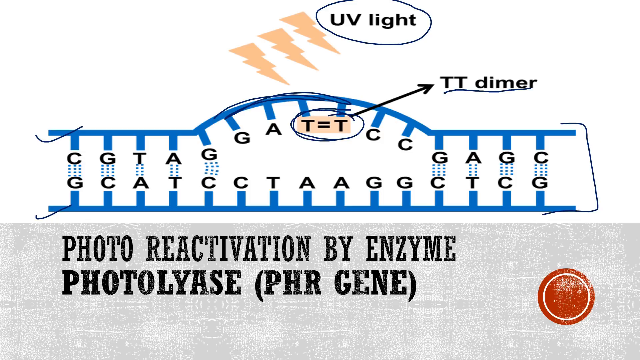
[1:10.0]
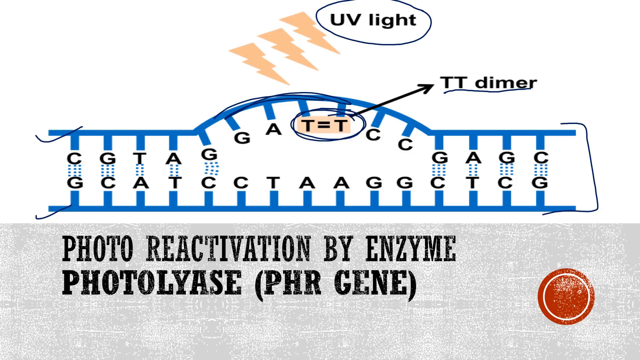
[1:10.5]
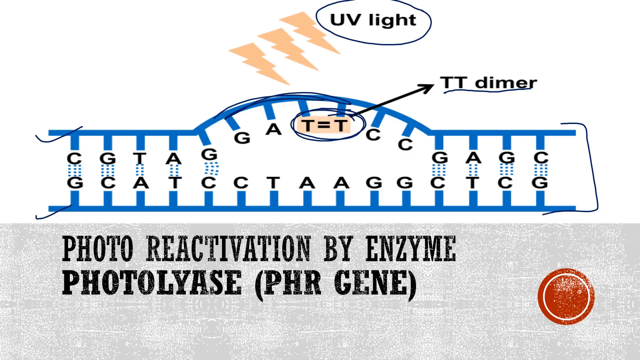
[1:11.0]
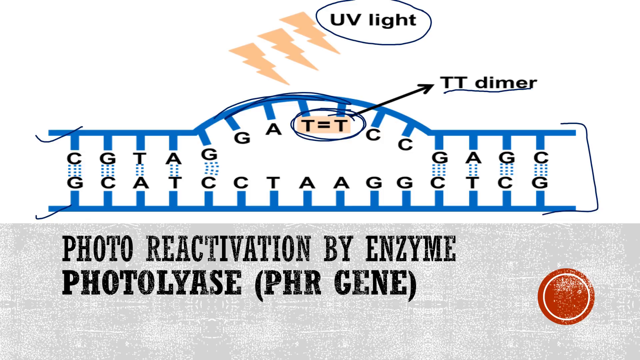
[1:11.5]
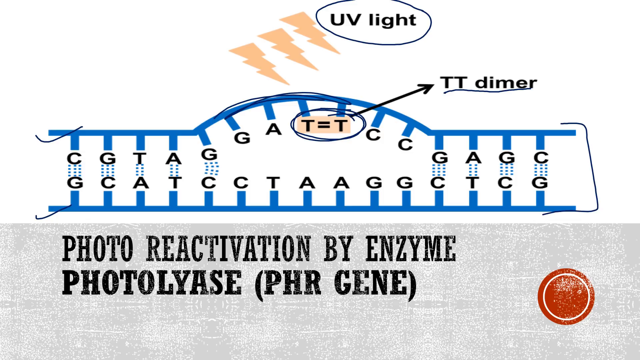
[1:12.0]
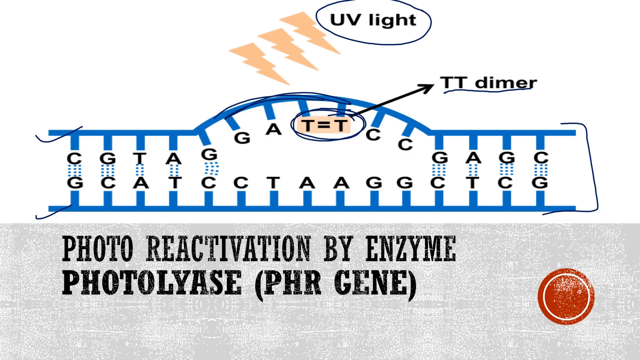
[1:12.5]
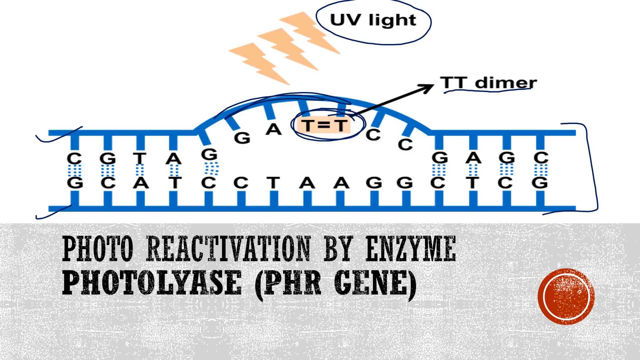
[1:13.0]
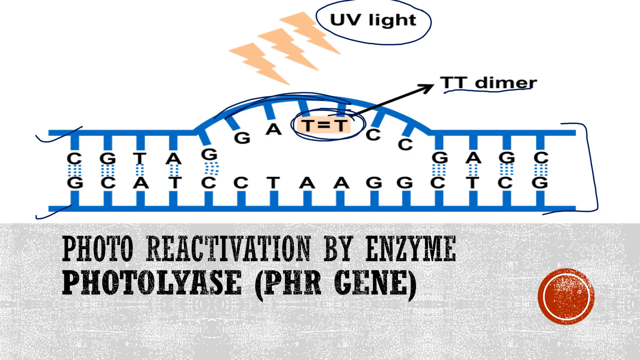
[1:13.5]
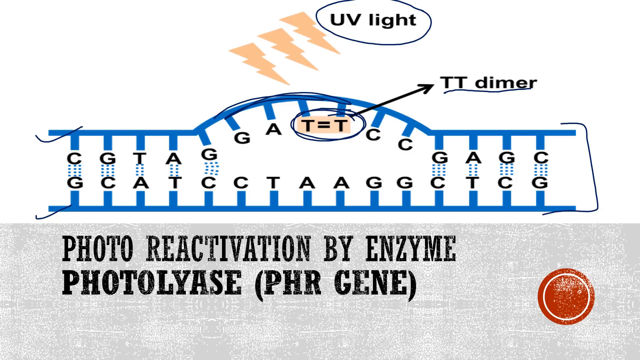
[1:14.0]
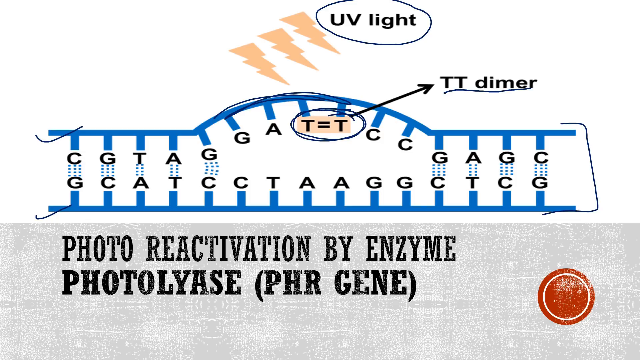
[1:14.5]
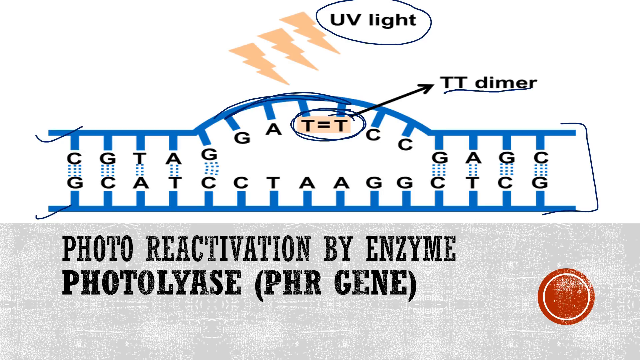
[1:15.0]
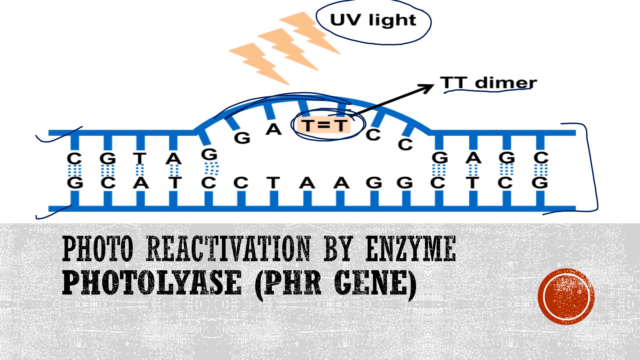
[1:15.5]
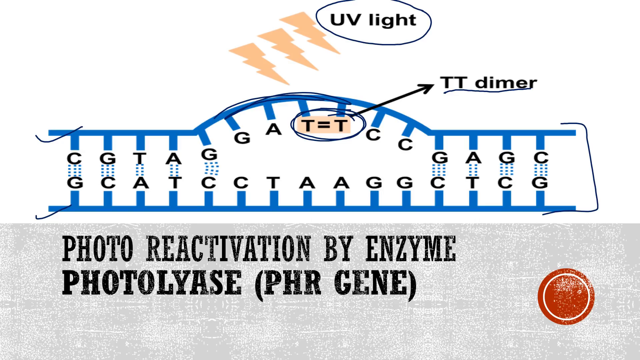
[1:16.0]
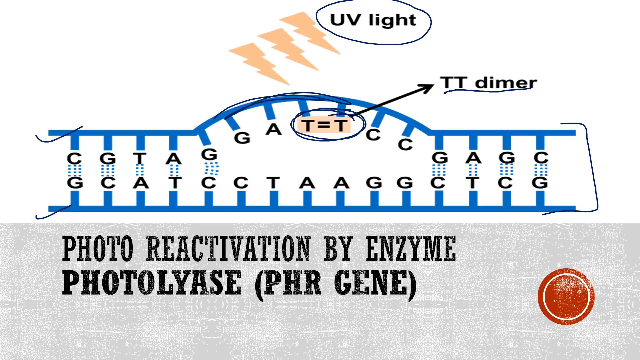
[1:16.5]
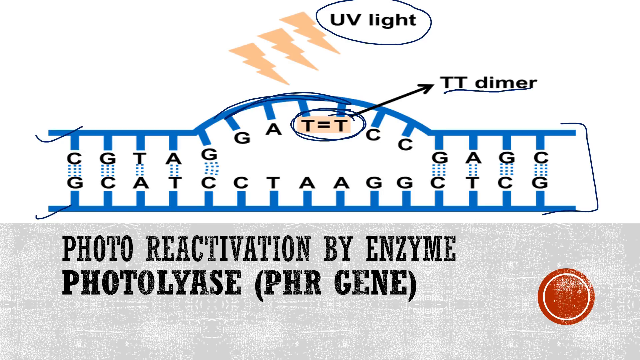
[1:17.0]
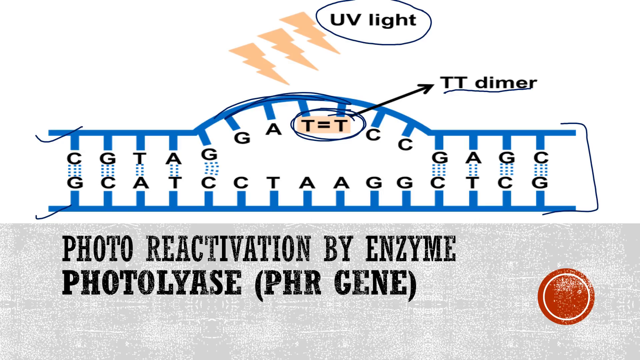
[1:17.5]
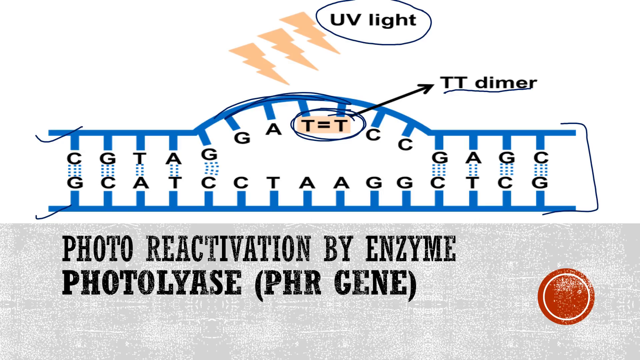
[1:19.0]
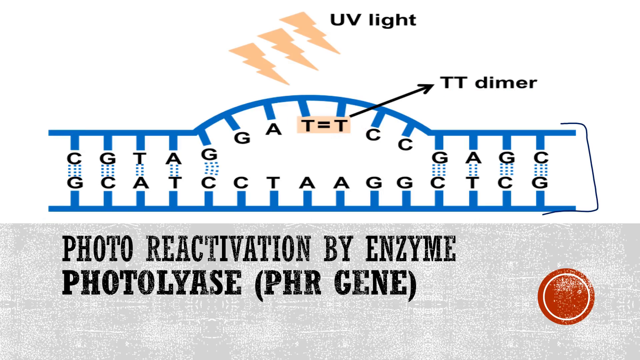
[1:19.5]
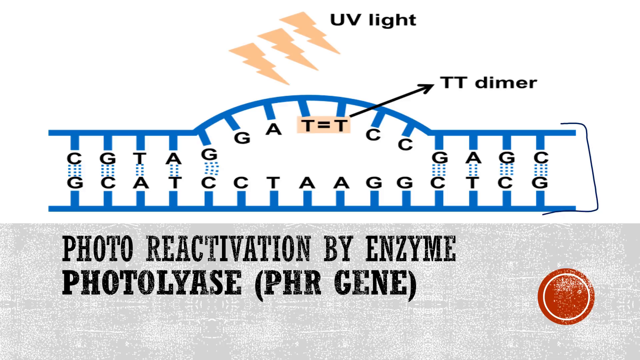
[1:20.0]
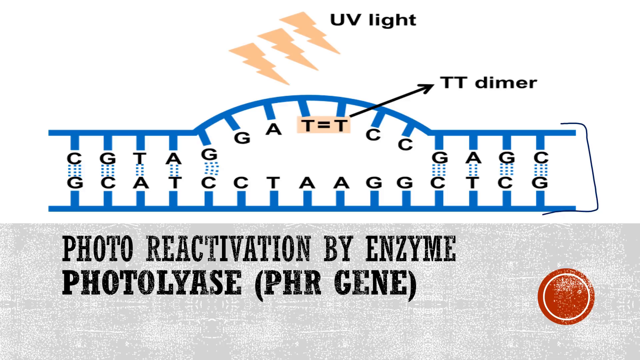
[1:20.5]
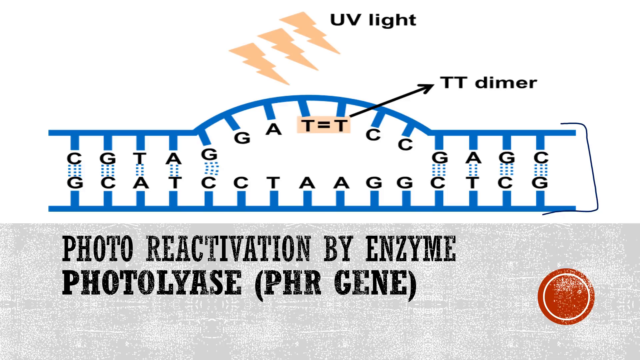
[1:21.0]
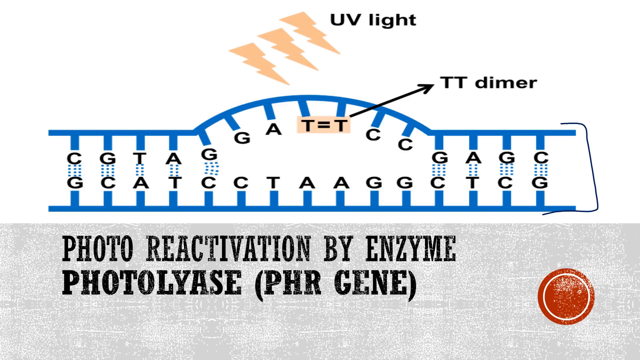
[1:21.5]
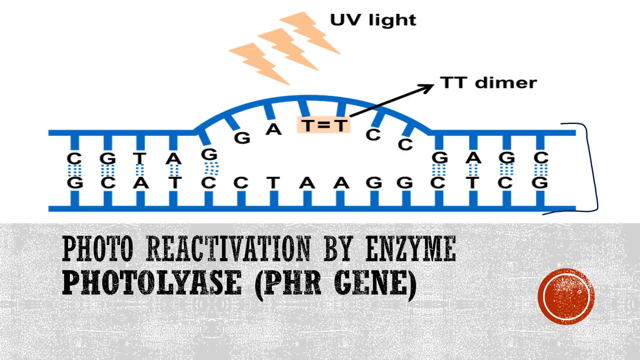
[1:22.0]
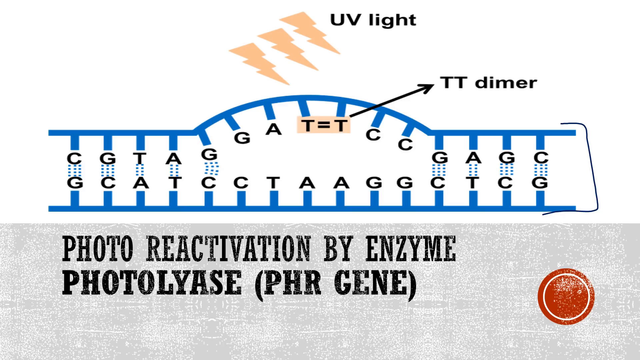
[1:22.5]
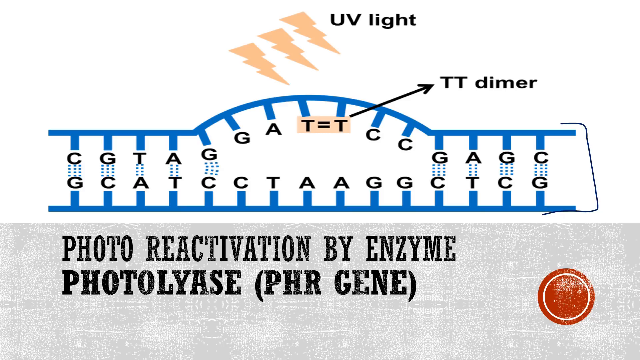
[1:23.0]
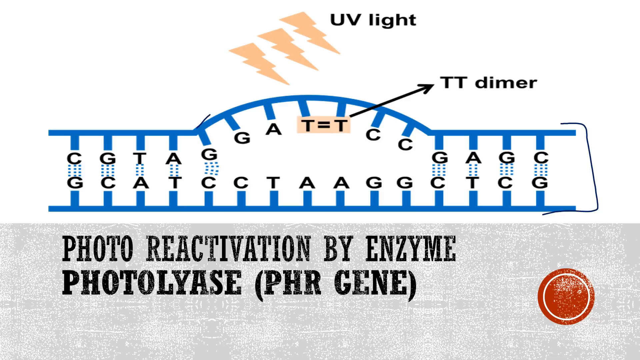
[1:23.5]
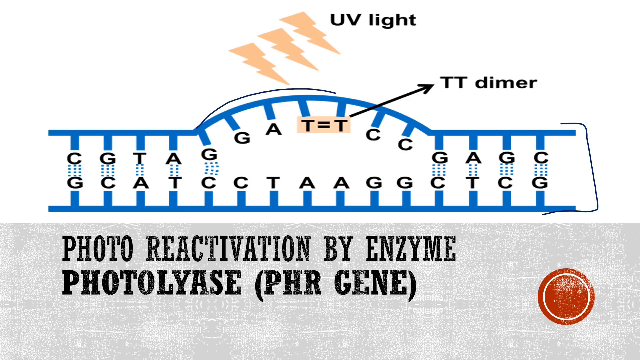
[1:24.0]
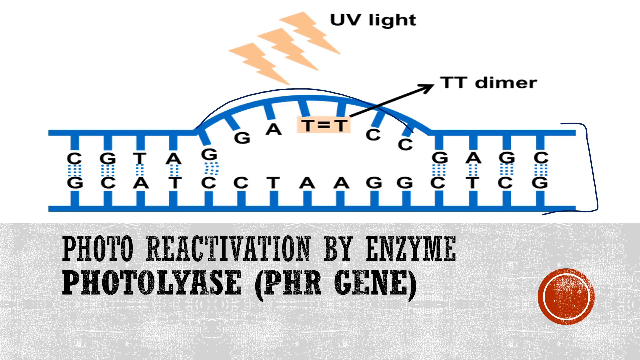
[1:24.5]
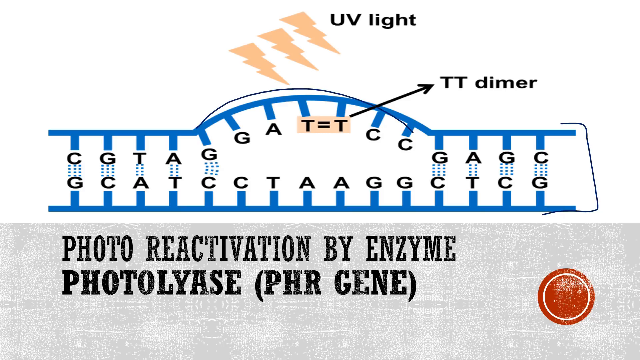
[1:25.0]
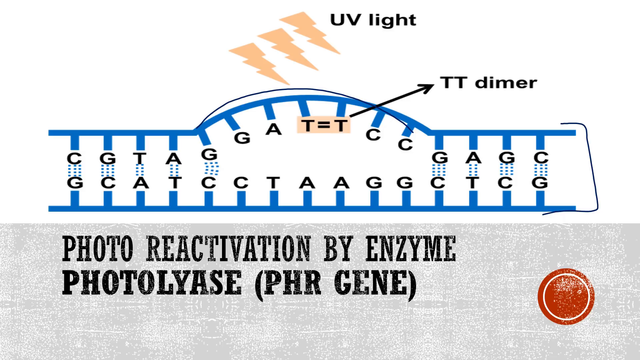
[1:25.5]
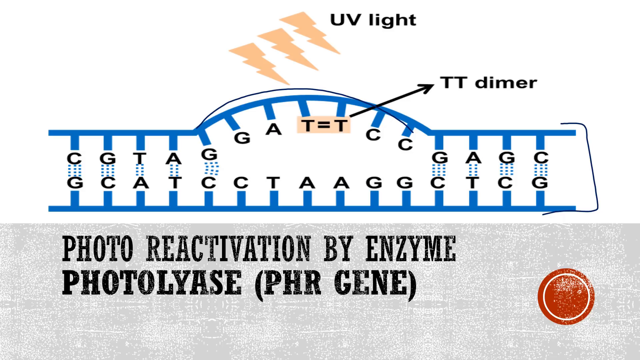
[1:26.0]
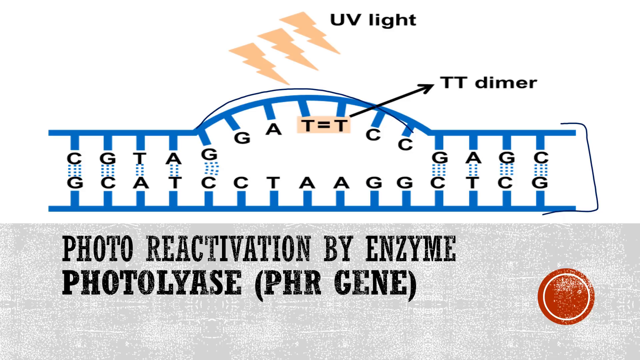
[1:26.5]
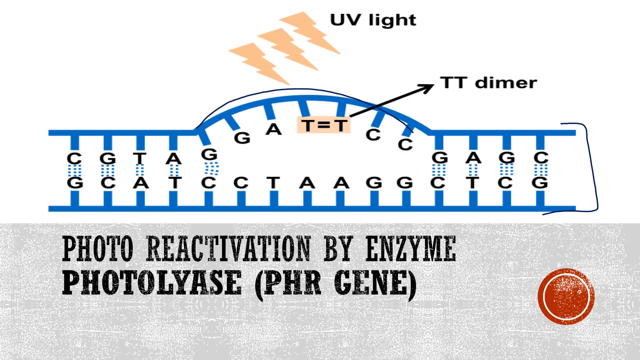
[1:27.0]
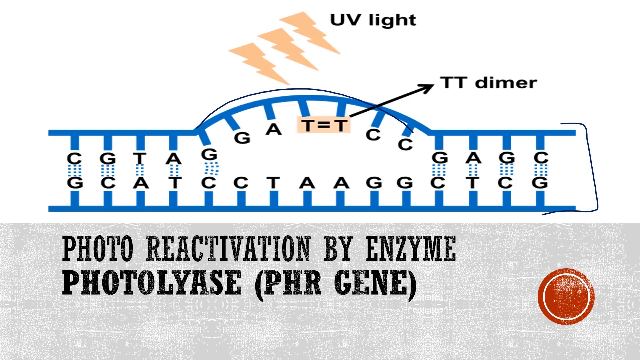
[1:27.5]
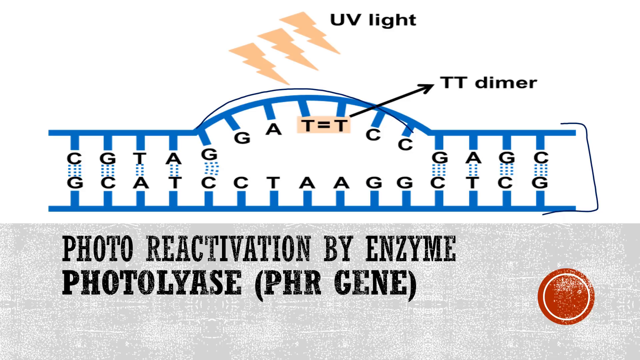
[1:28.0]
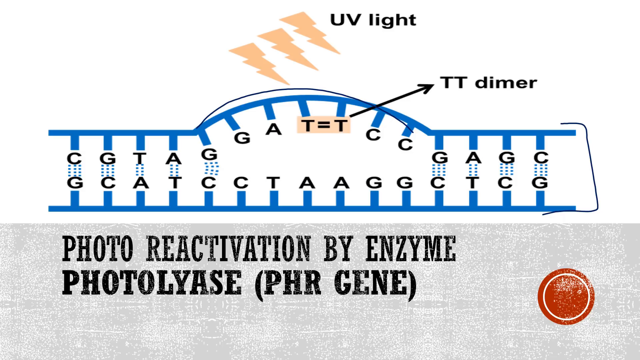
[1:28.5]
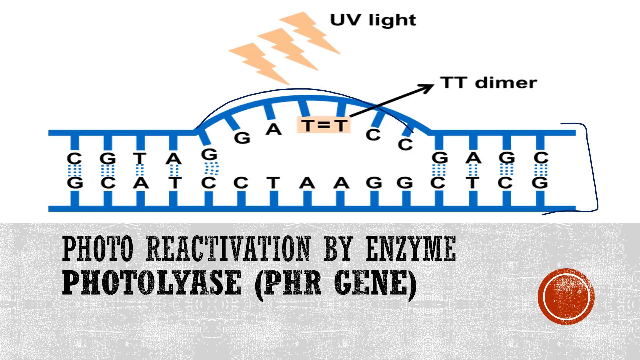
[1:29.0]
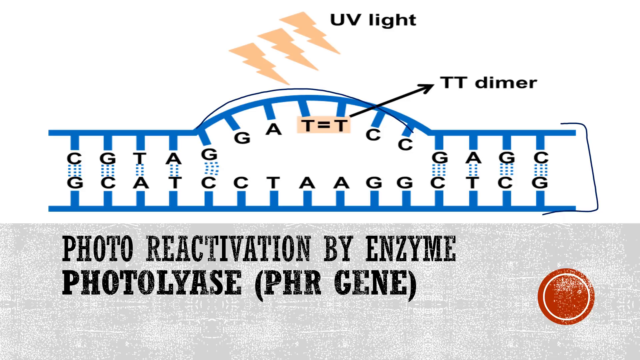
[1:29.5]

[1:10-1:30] A diagram shows a bump in the area of the DNA where the damage occurs.